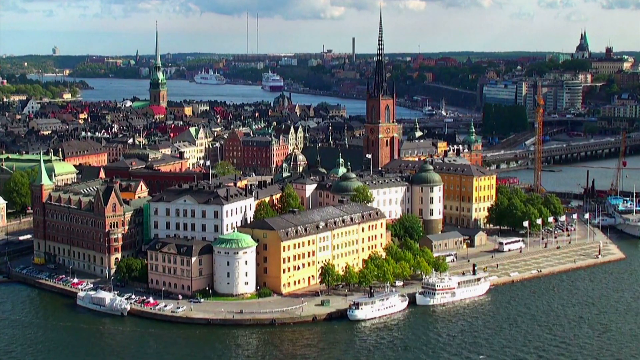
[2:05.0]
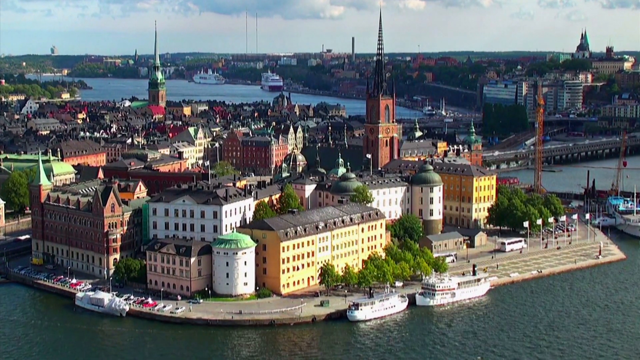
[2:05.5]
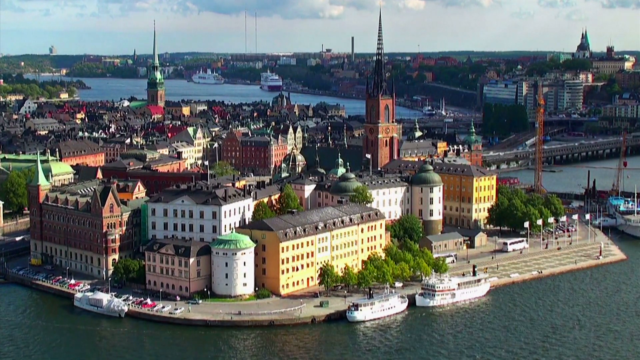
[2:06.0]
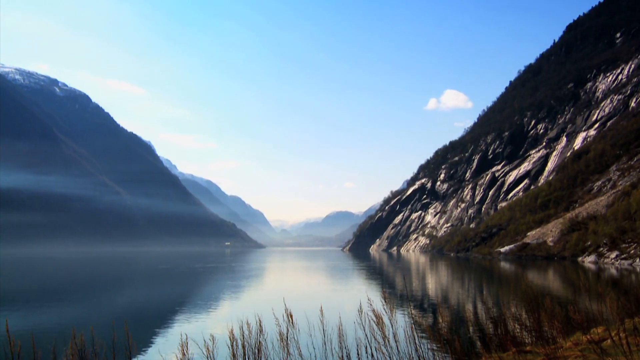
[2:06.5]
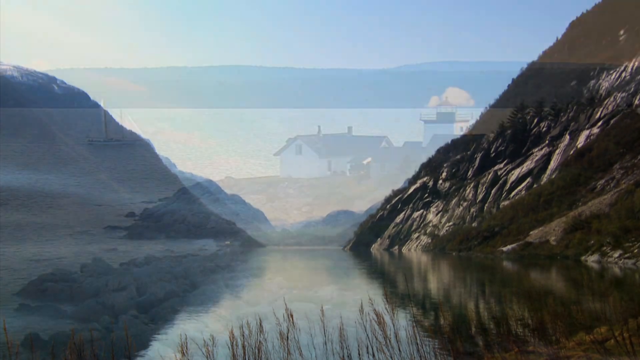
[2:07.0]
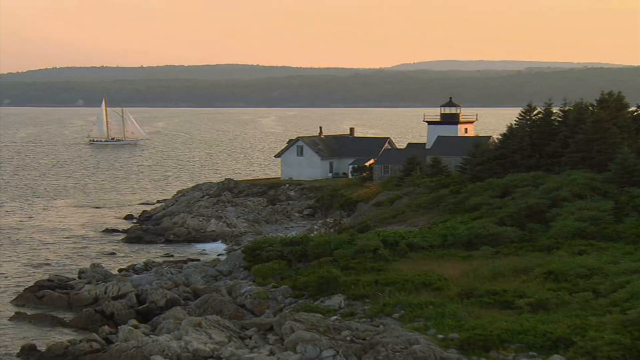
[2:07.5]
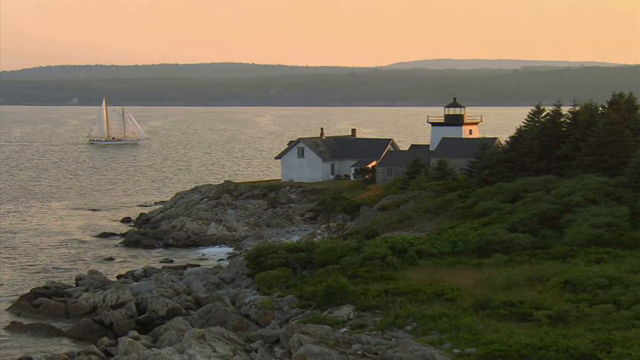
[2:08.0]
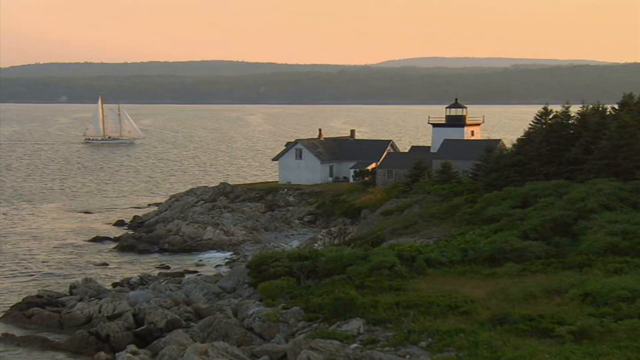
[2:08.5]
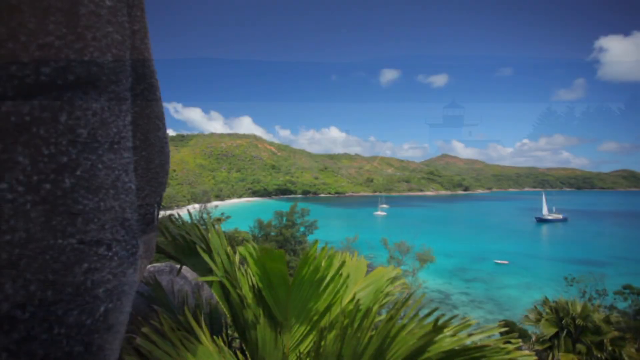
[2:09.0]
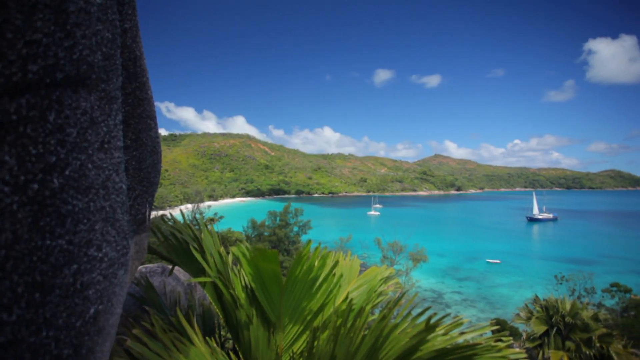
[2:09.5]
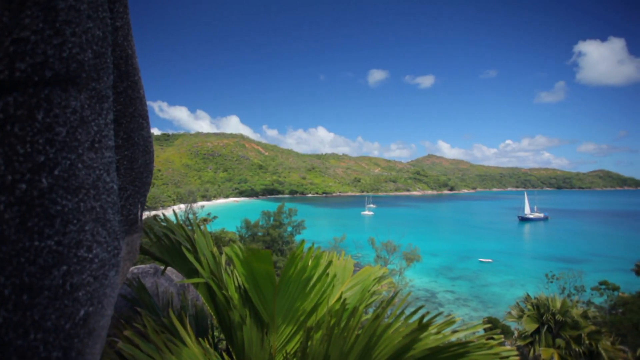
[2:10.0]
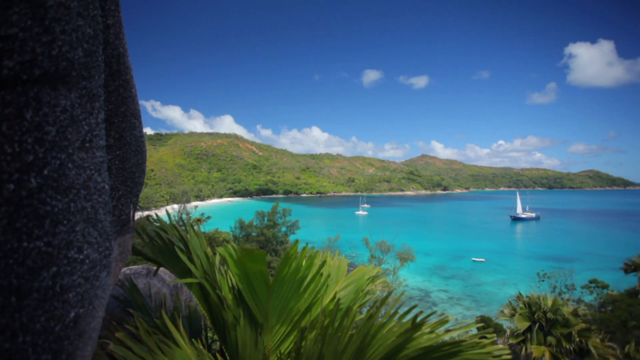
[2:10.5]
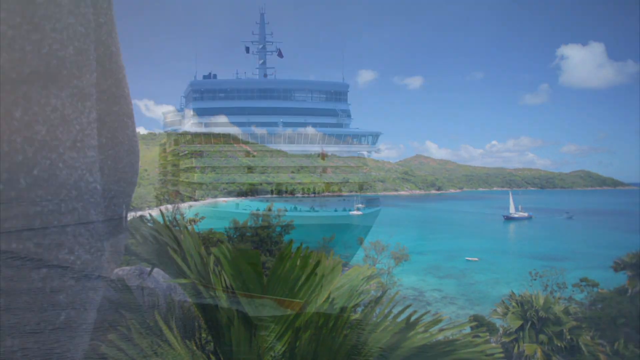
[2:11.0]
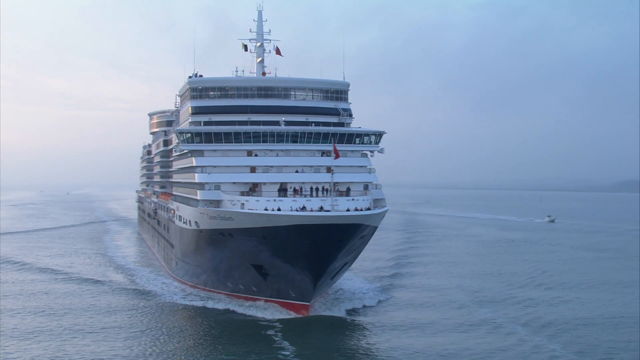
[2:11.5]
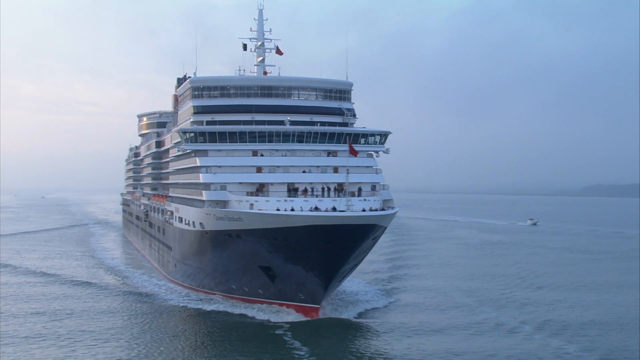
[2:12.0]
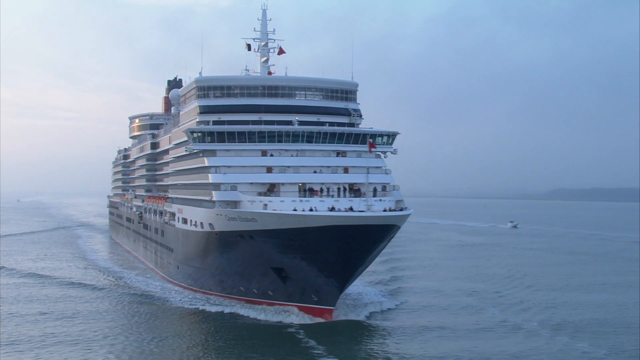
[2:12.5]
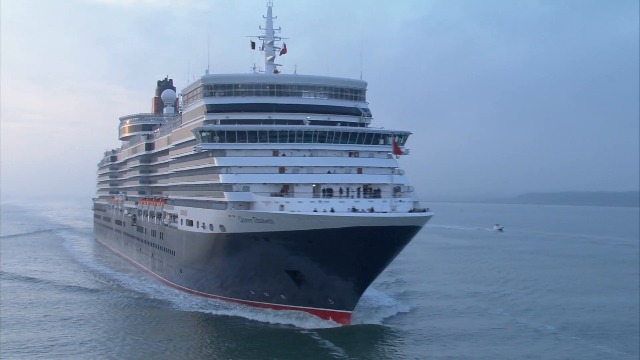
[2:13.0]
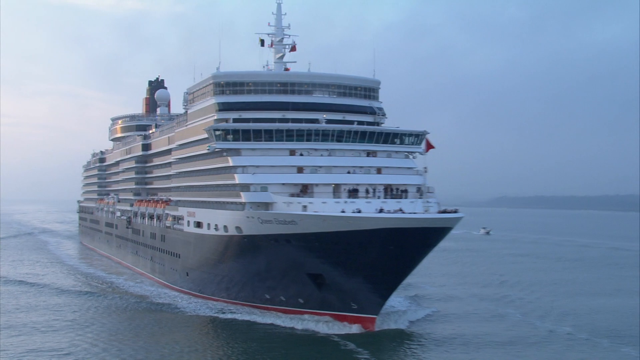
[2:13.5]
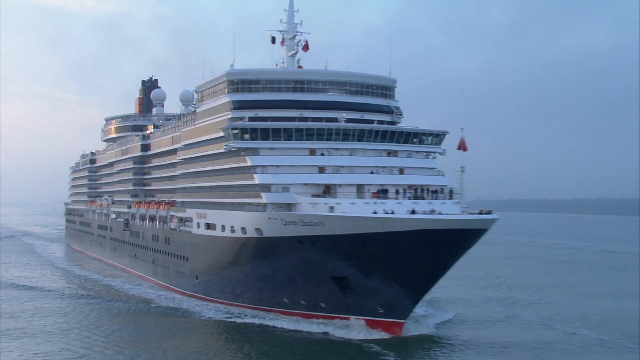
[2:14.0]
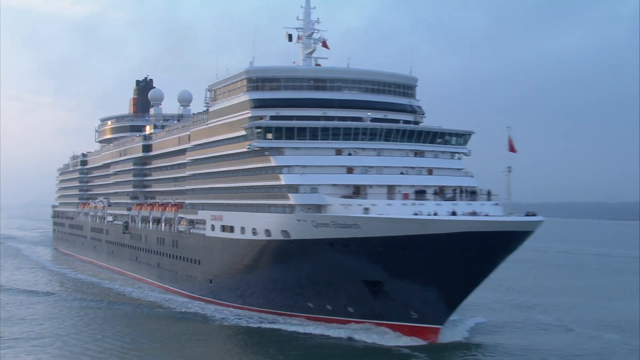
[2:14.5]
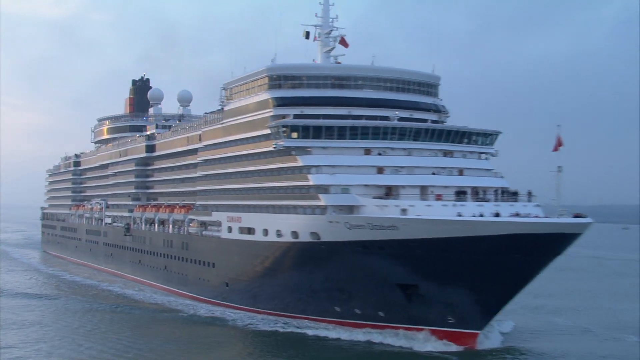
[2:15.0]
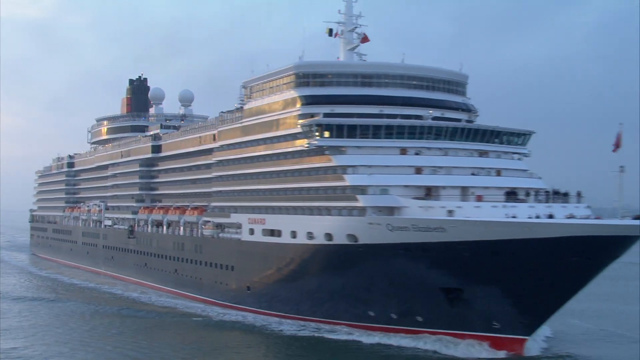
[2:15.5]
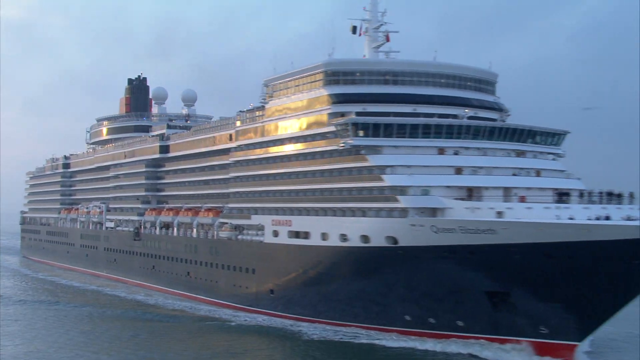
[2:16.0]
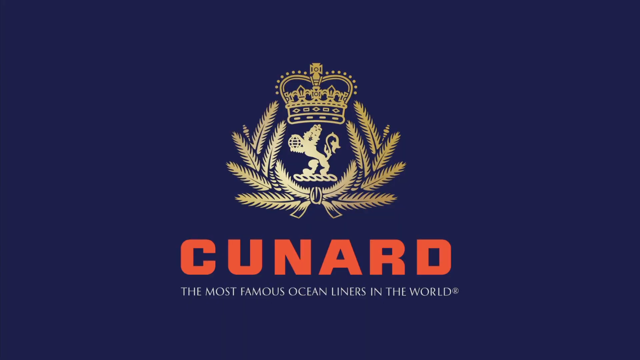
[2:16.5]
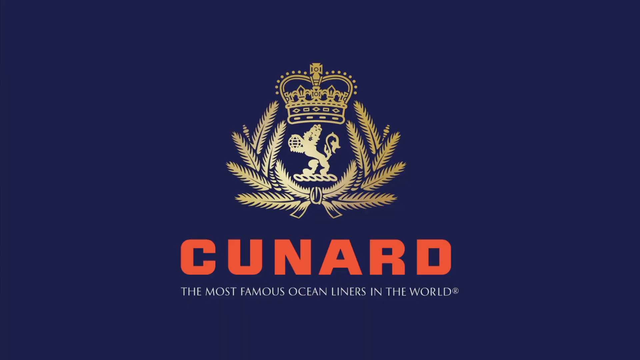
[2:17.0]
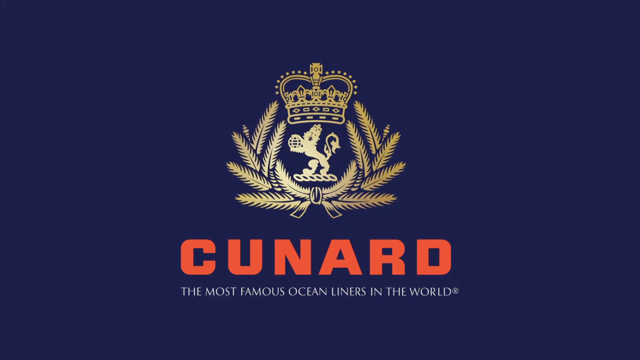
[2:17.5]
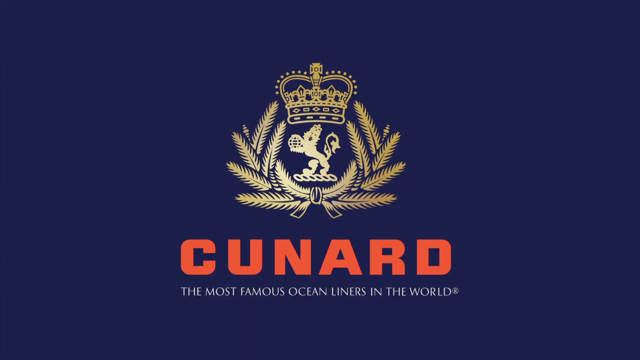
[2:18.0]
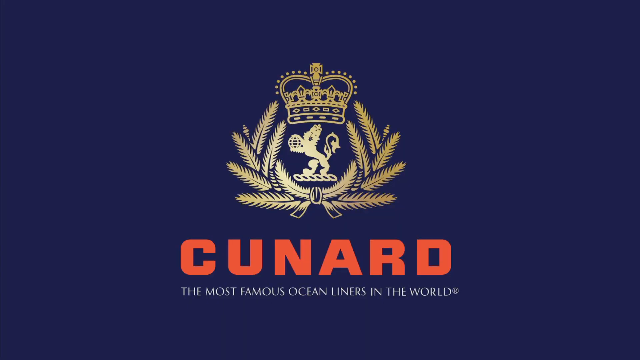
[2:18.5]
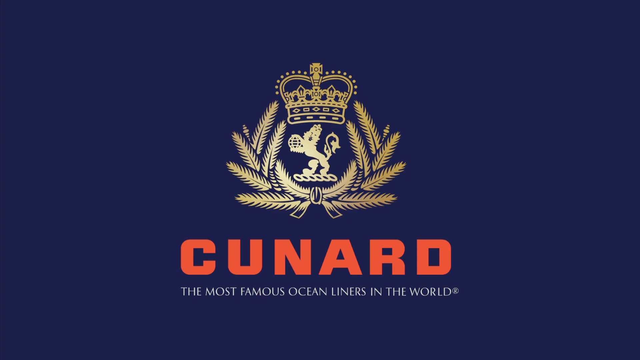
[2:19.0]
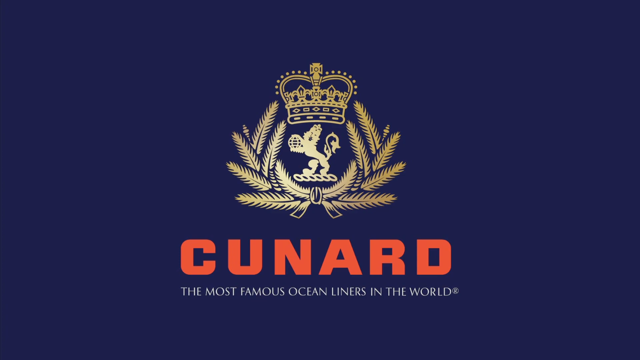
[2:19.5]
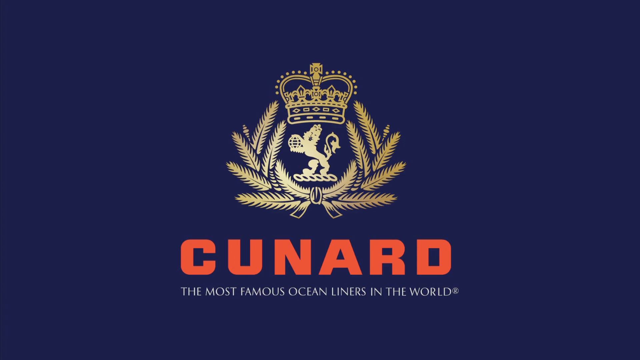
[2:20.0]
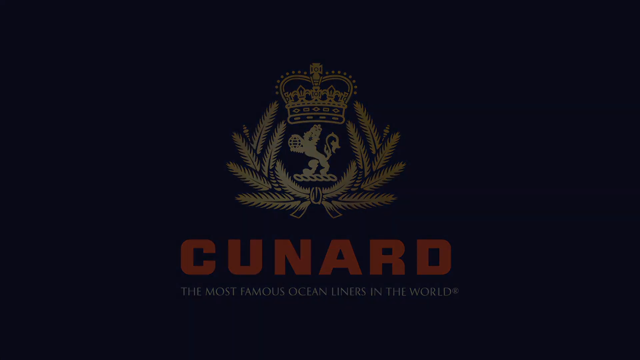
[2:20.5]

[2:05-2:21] A Scandinavian-looking city with variously colored buildings lies right alongside the water. It changes very quickly to a fjord with water and sharp cliffs on the side. Next is a natural setting with a small lighthouse, lots of water, hills and a sailboat out on the water. A new scene appears to show a Caribbean or South Pacific beach with very blue water, some sand and very verdant green hills on a sunny day, with a few sailboats on the water and a few clouds in the sky. Then a large cruise ship appears, red on the bottom, followed by a few navy blue floors and mostly white upper levels, with text on the left-hand side reading "Cunard, Queen Elizabeth." At the end, the word "Cunard" appears against a navy blue backdrop.